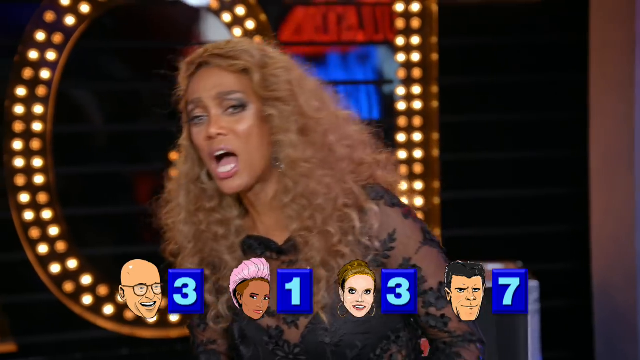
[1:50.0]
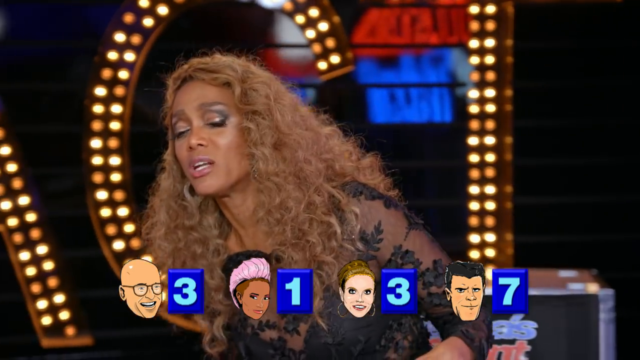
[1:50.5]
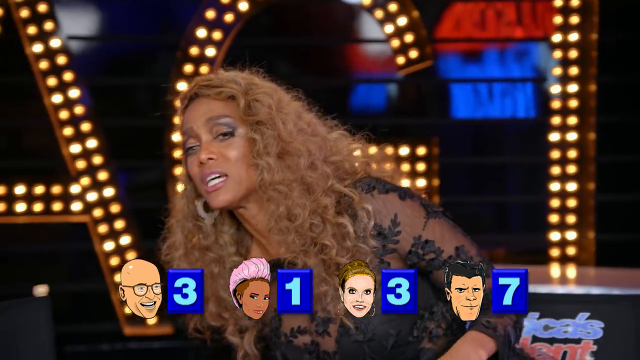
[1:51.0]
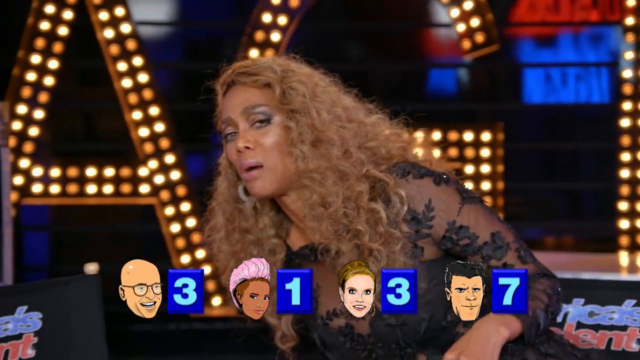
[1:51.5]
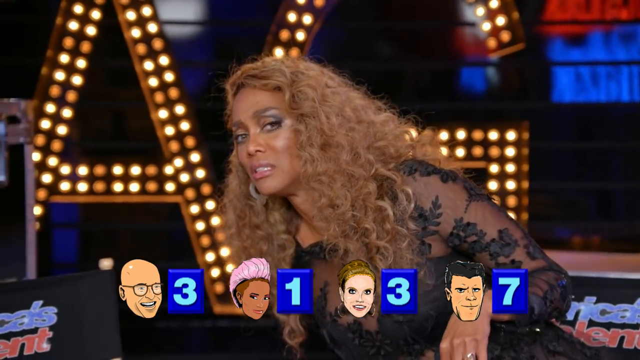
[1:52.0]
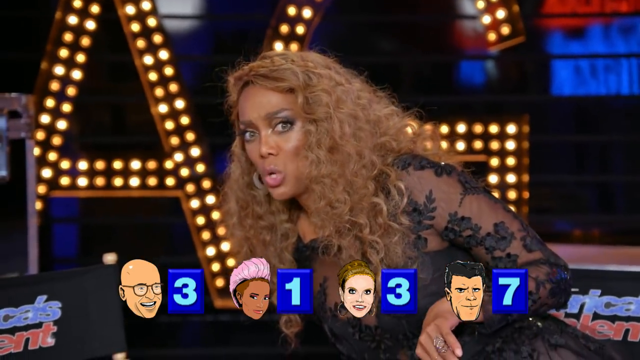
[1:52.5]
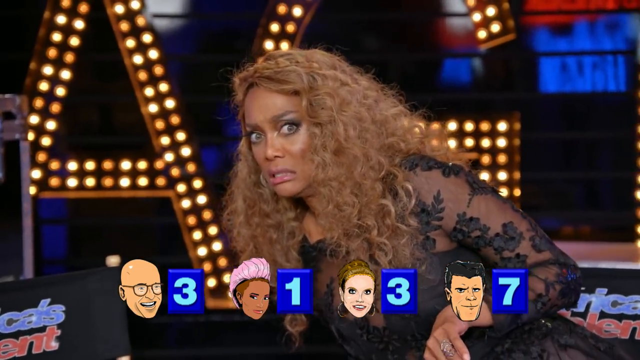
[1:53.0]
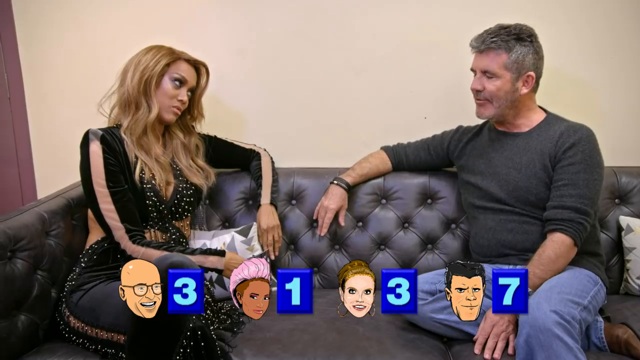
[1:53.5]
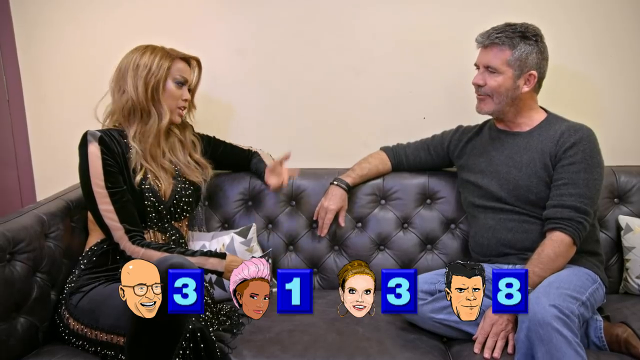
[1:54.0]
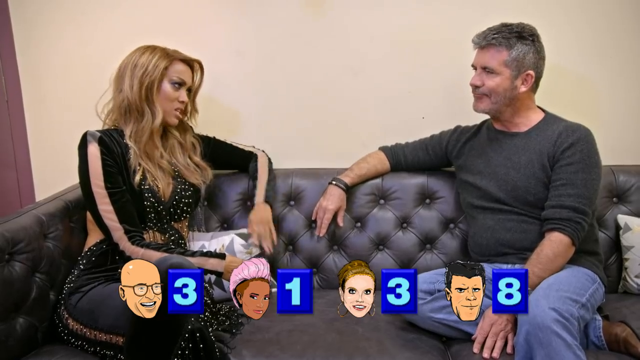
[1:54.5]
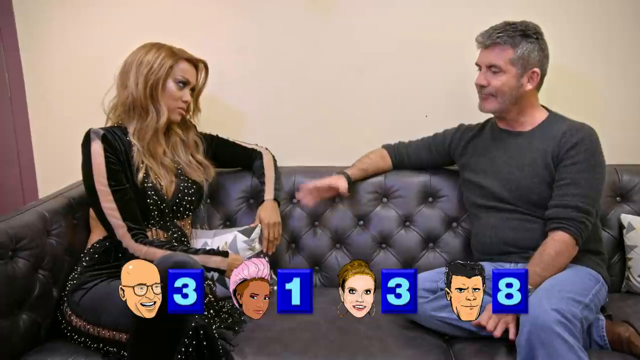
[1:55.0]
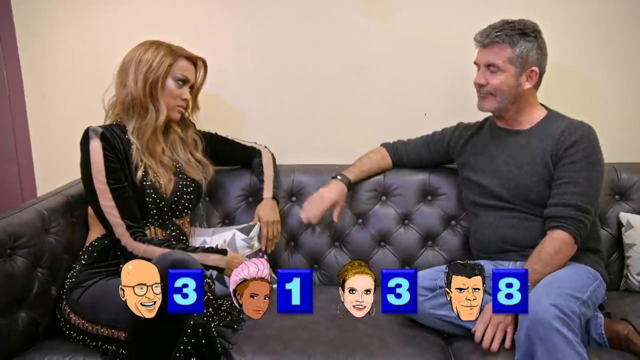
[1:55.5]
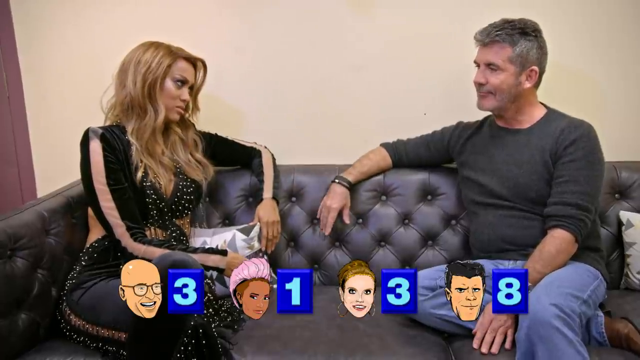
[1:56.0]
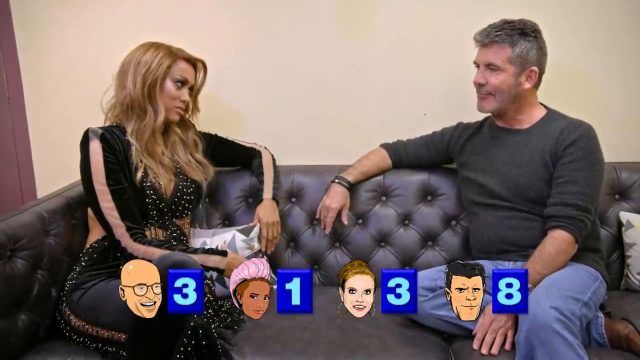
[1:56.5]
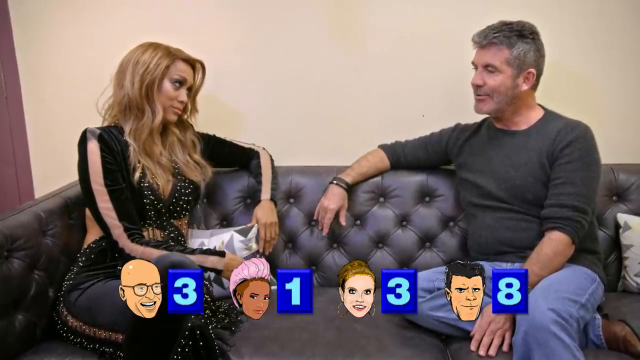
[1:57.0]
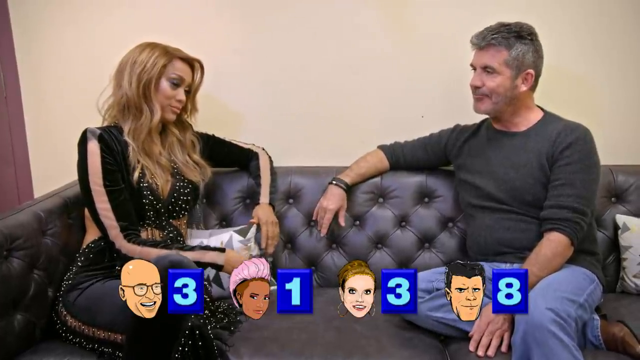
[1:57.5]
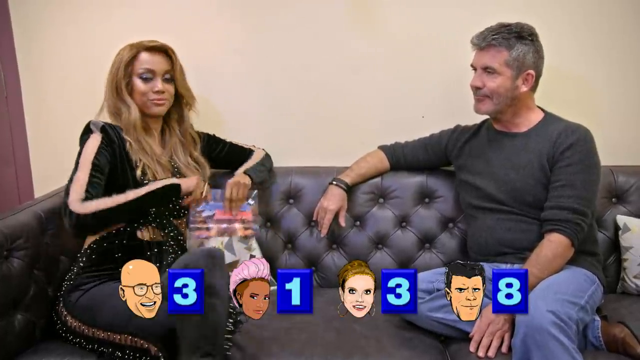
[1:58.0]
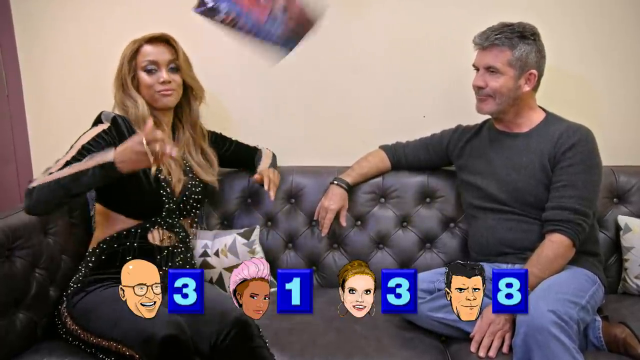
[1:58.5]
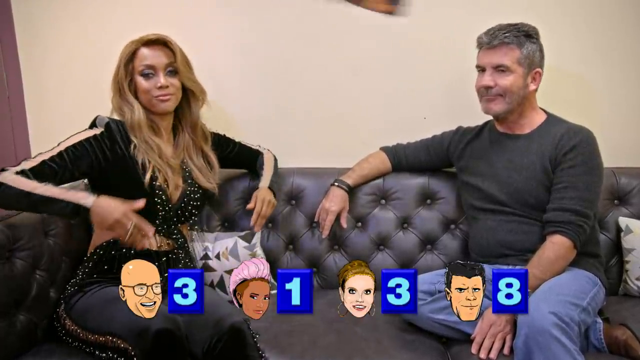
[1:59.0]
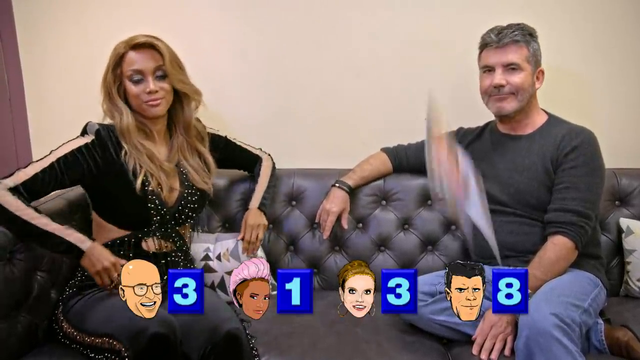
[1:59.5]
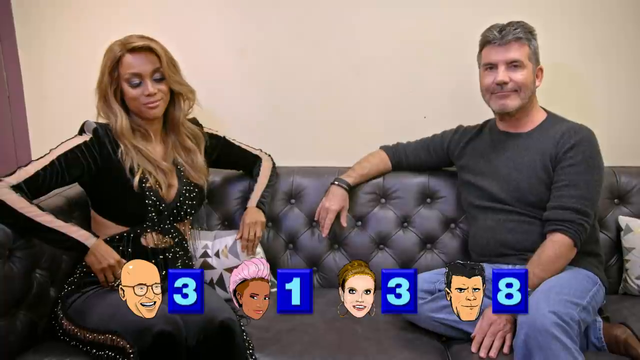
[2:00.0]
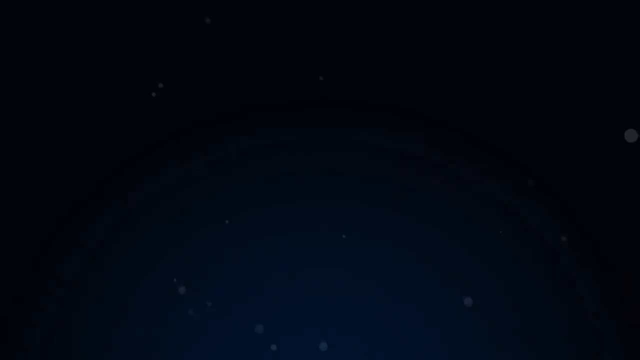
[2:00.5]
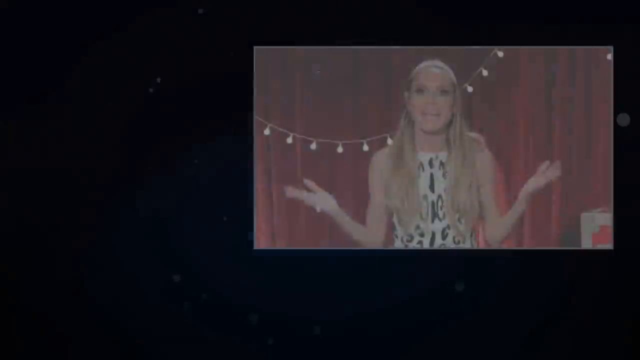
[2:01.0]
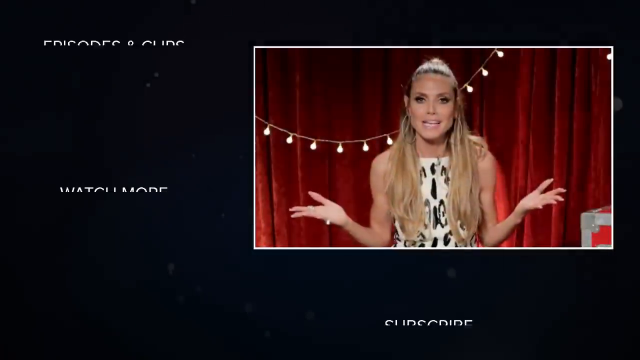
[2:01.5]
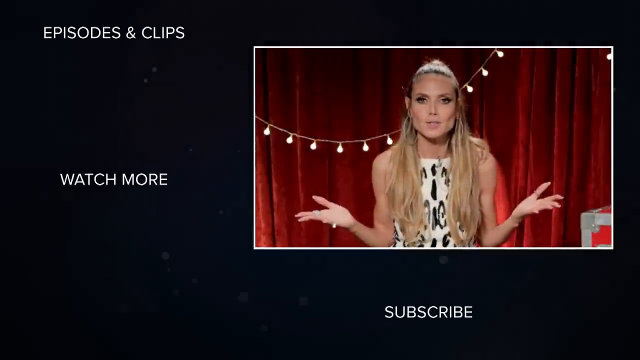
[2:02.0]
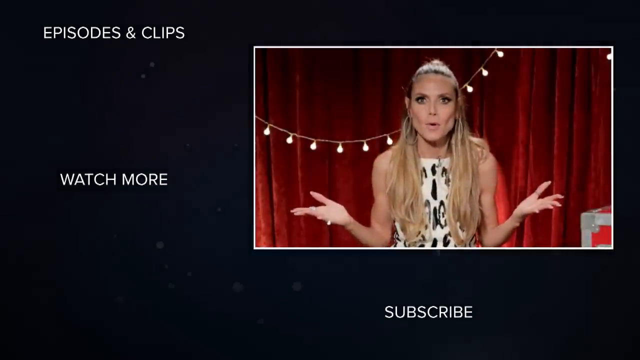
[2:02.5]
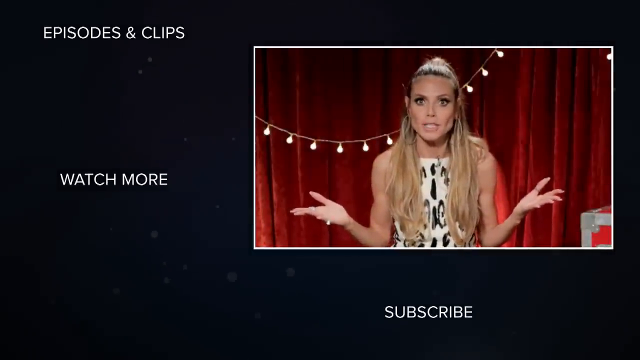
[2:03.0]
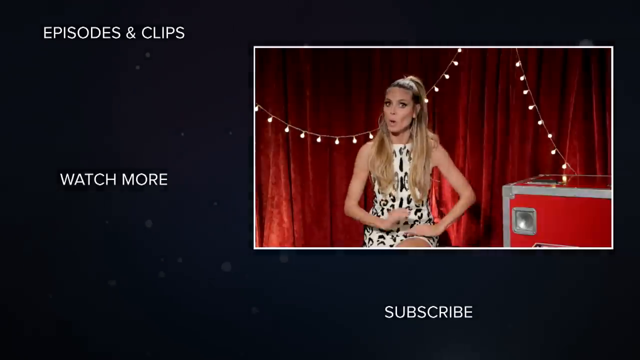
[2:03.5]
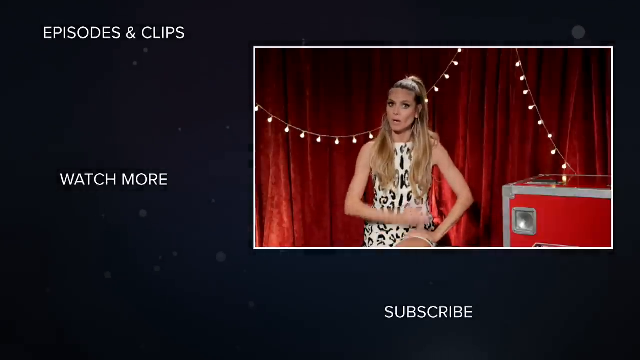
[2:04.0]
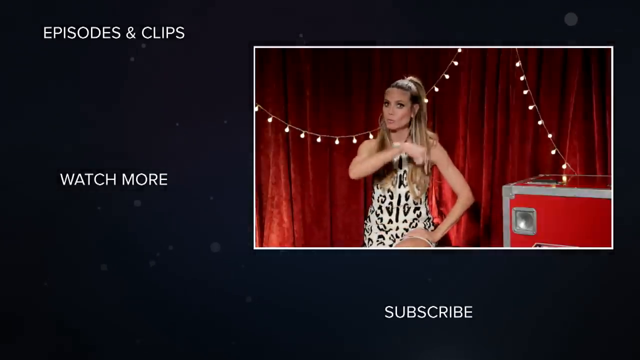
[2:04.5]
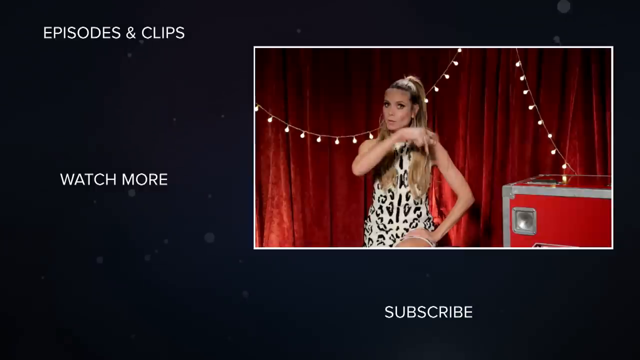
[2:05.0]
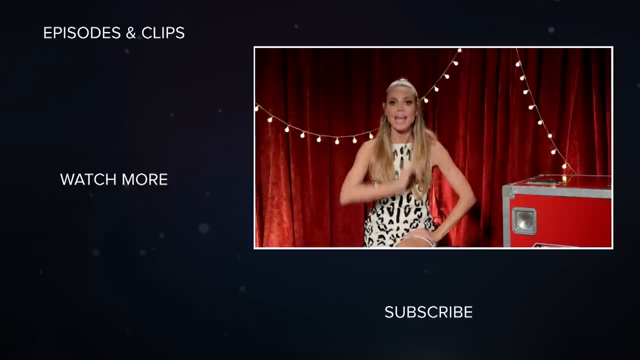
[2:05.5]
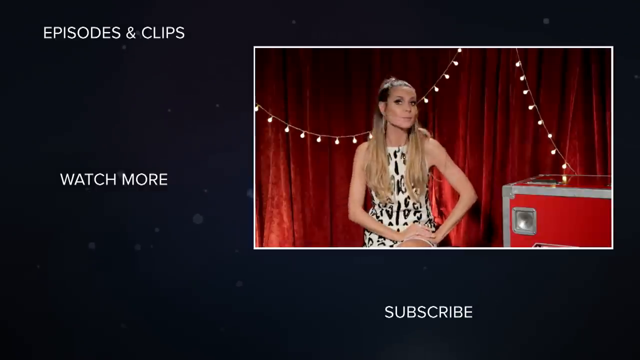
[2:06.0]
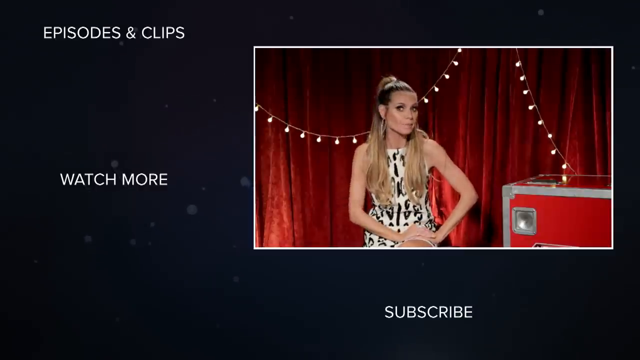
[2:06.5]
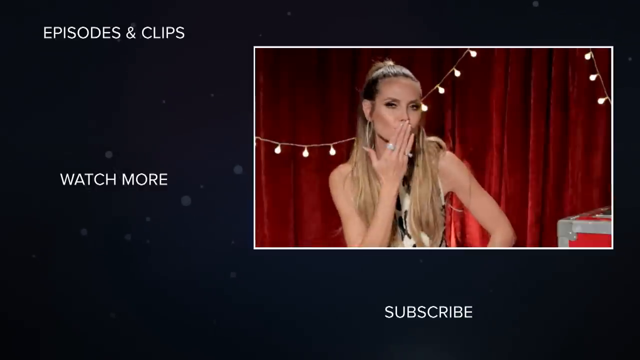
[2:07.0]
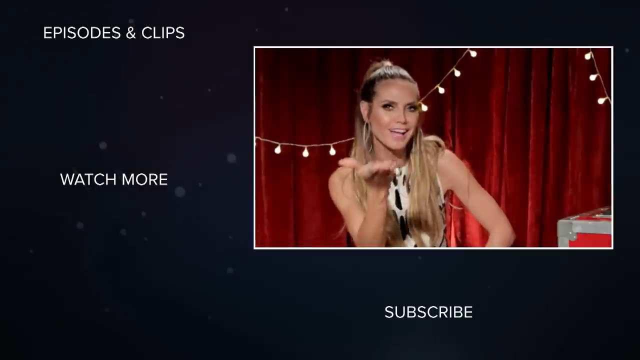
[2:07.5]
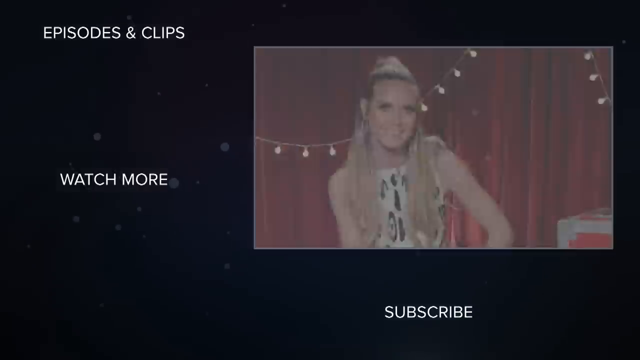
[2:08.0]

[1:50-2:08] Tyra speaks to Simon, who sits on a couch with her and kind of nods his head, and Tyra throws her note cards off to the side in front. With the darker-skinned woman judge, the woman has left and Tyra looks after her, kind of seeing where she went. Heidi Klum then appears by herself in a circle, with credits for the show running next to her. Heidi, with her hair up and in front of a red curtain, talks with her arms out on either side, then puts her hands on her leg and blows a kiss to the audience at the very end of what she is saying, apparently as the interviews come to a close.